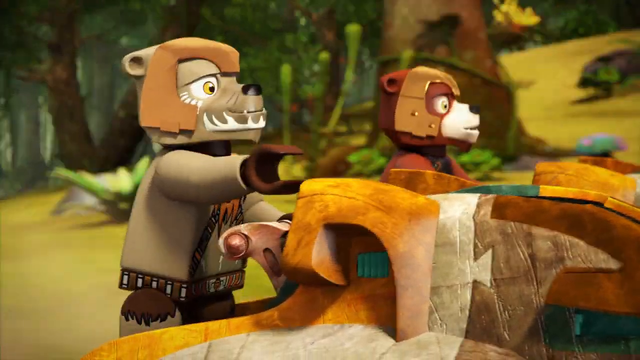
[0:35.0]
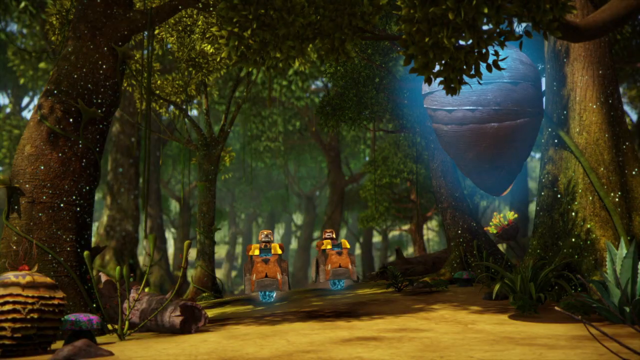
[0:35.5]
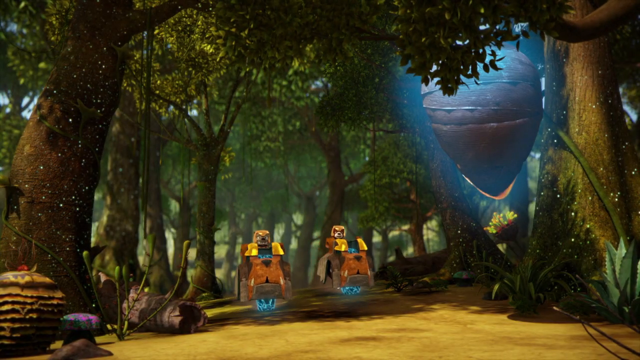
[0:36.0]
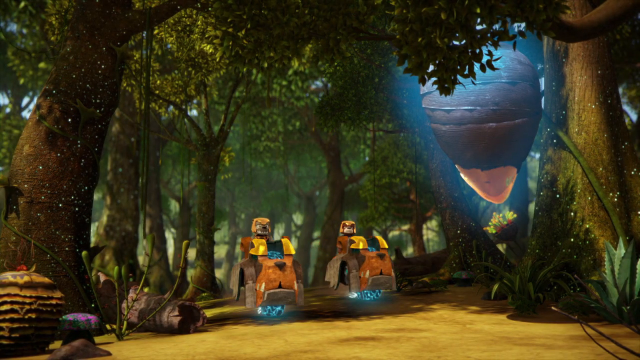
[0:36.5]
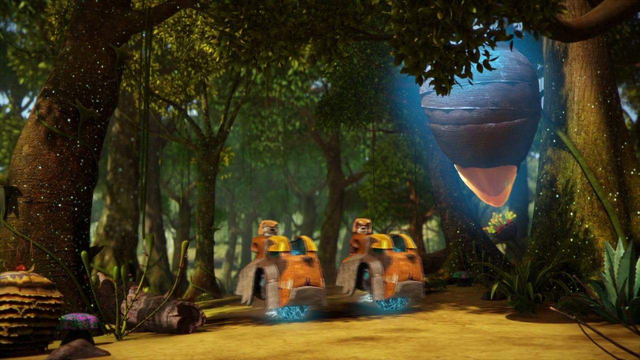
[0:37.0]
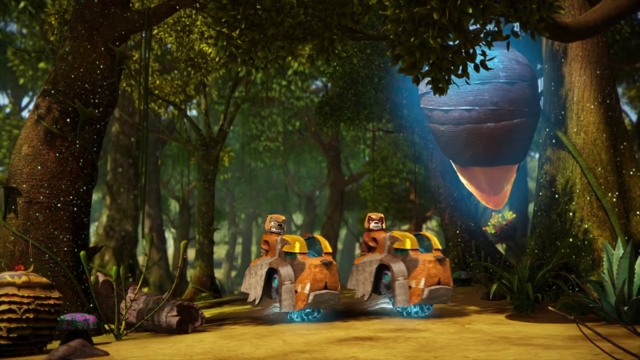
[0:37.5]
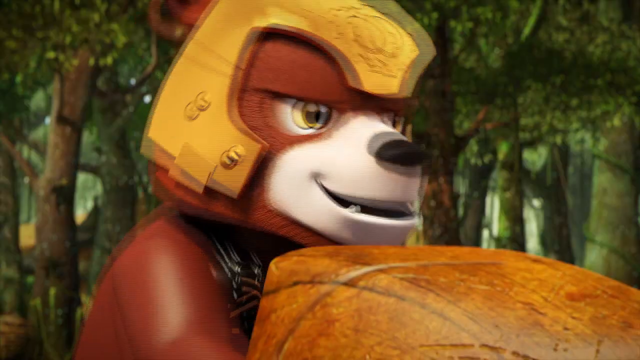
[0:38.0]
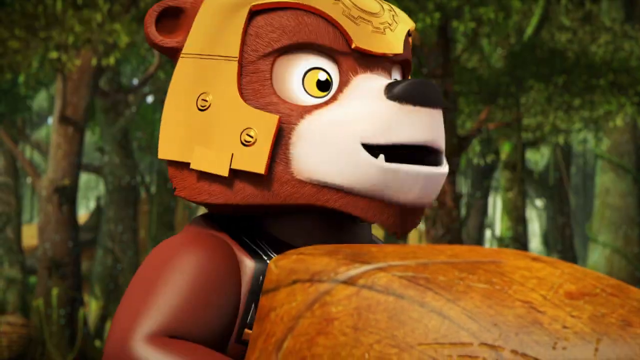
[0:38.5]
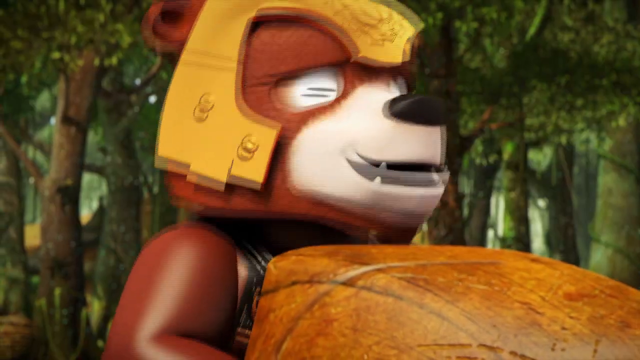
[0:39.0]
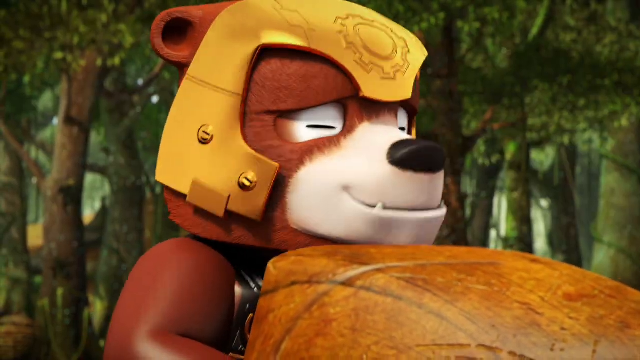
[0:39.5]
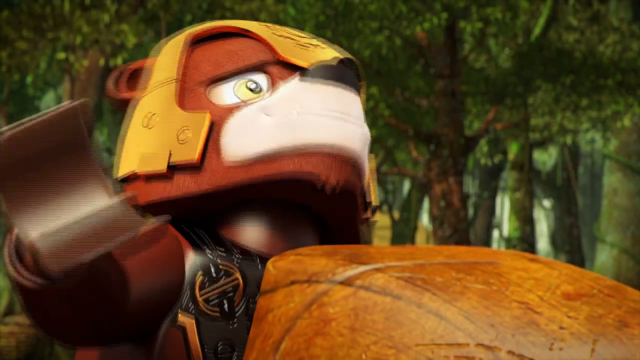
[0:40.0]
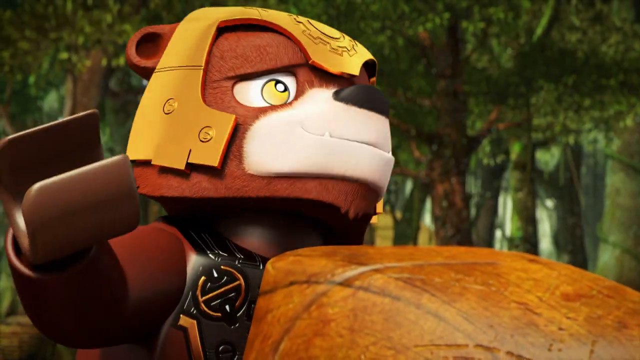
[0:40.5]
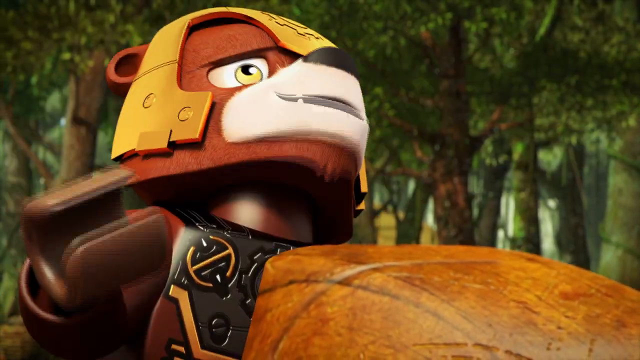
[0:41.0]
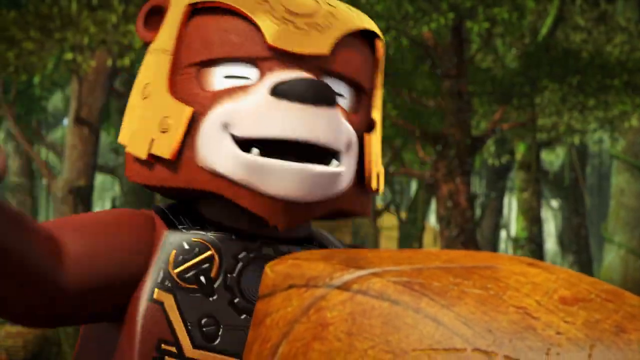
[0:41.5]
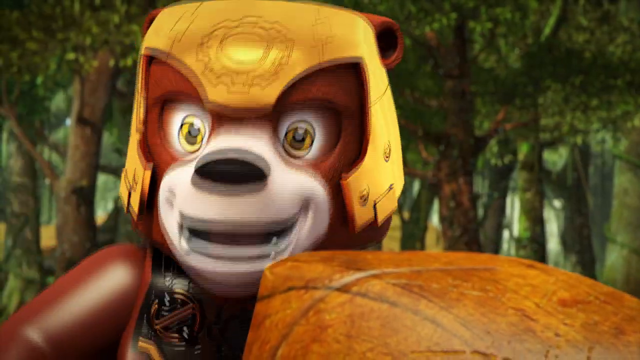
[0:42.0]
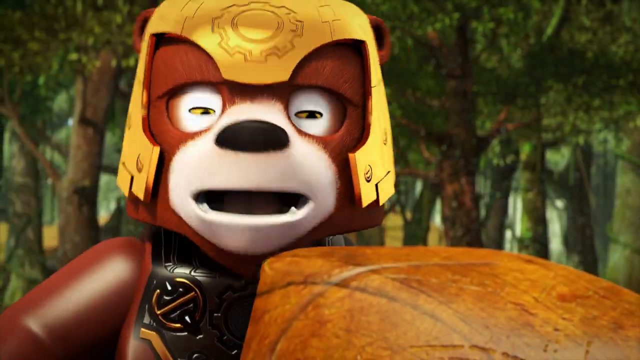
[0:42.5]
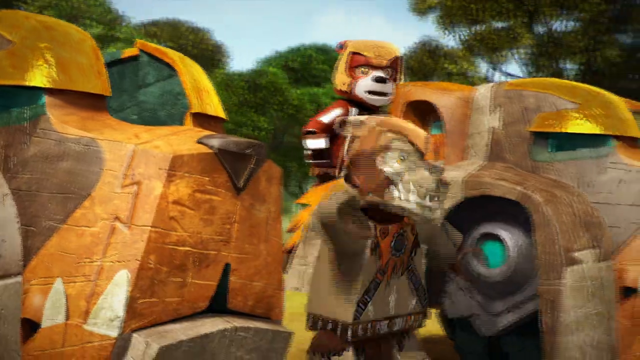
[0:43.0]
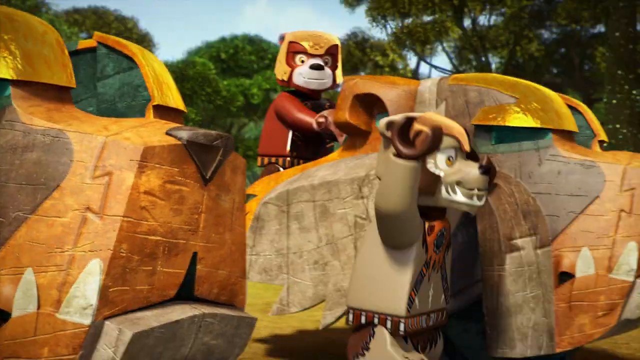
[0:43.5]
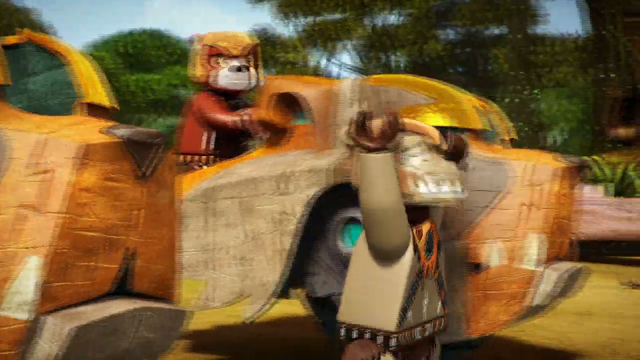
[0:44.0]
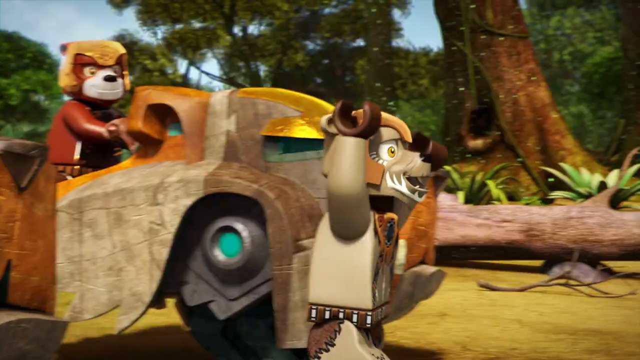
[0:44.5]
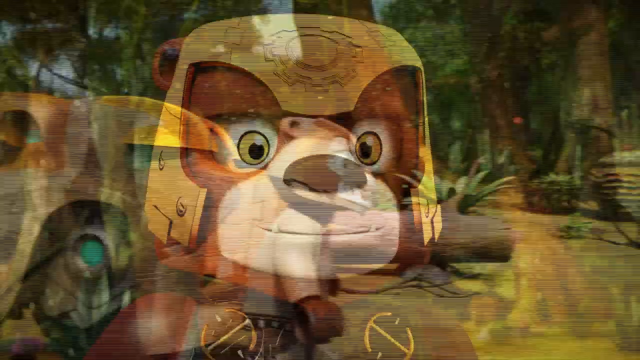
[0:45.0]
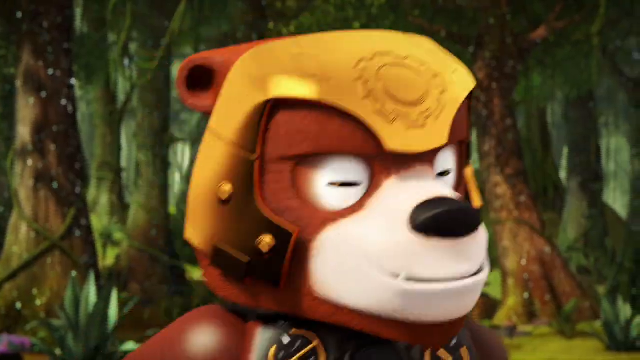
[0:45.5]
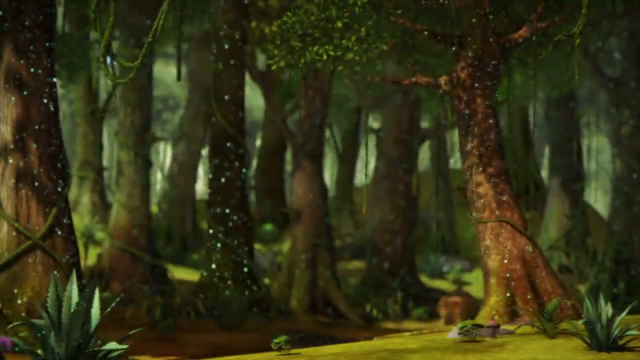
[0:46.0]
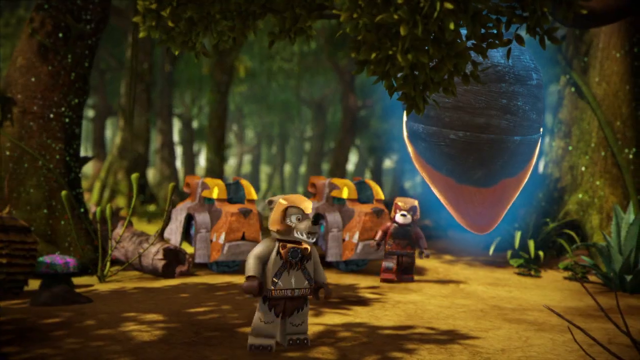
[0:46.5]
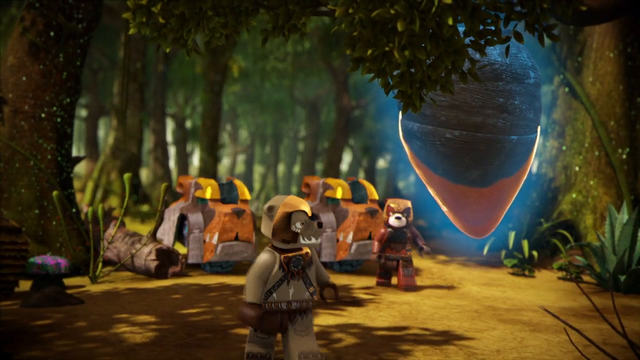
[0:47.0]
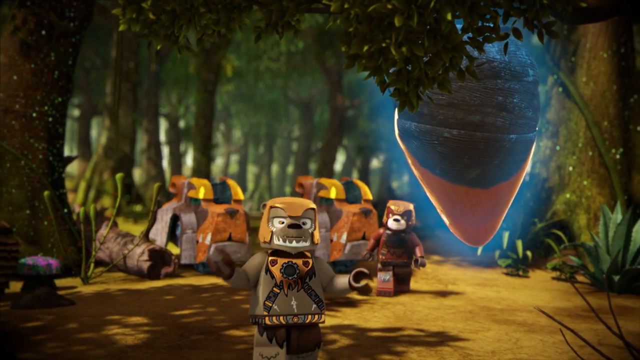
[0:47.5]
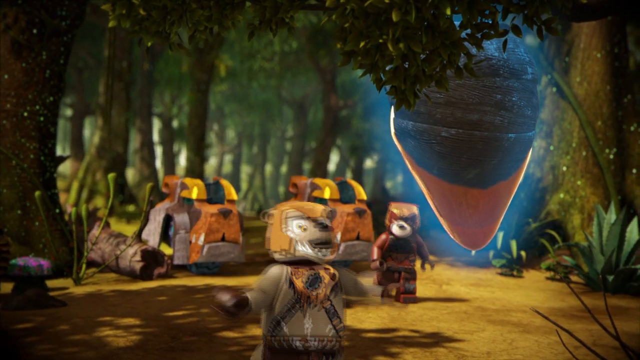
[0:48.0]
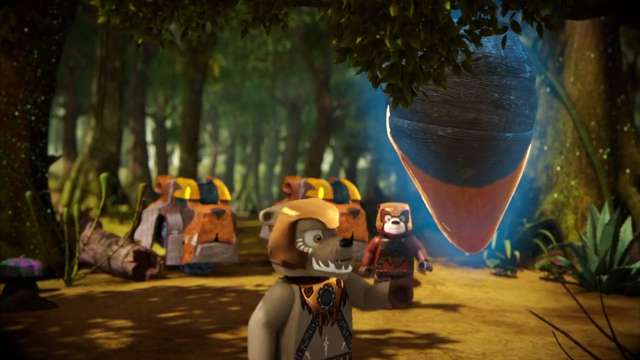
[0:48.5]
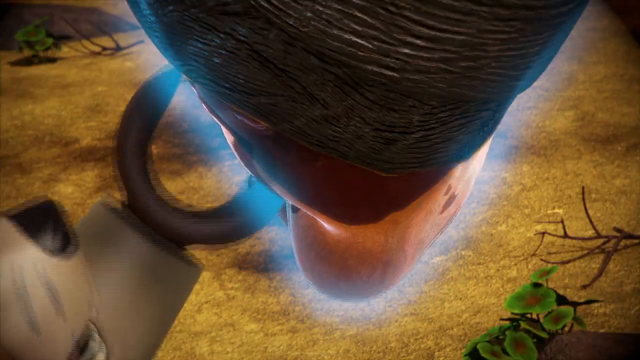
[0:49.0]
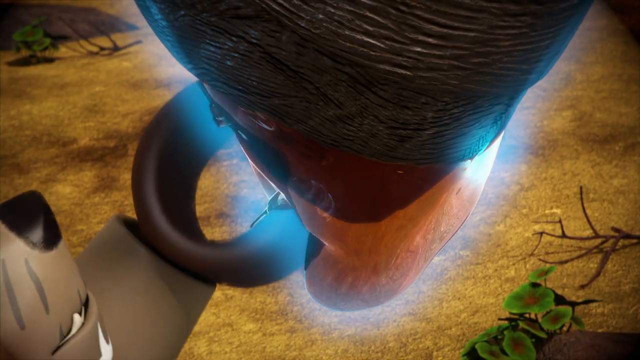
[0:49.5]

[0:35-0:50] The two riders are bear characters wearing golden helmets. They step off their motorbikes inside the forest, see a large beehive dripping with honey hanging from a tree, and walk toward it as they talk to each other. The bear in the grey outfit uses its right hand to pinch some of the dripping honey and looks like it is about to eat it. The bears wear Roman-style golden helmets. Their large motorbikes have a front that resembles a bear's head and are mainly brown, golden and grey; instead of black rubber wheels, they run on a blue electric power, like the crystal ball the bee was riding on.